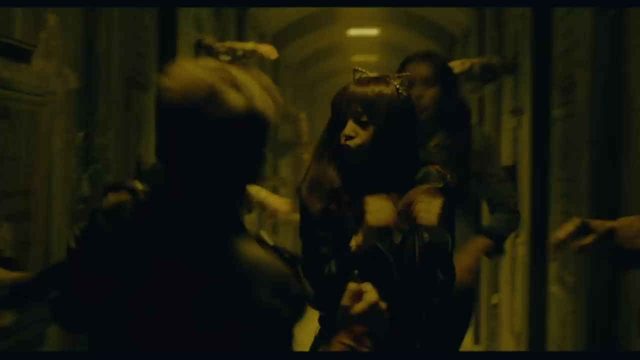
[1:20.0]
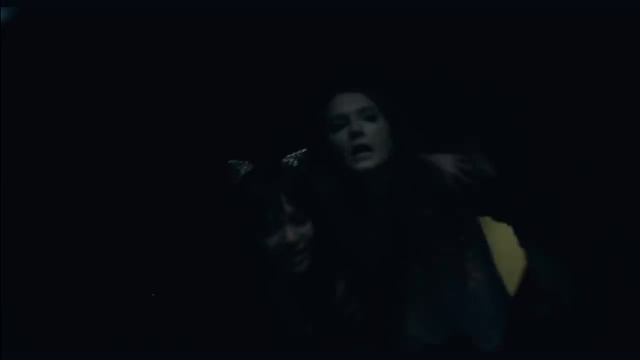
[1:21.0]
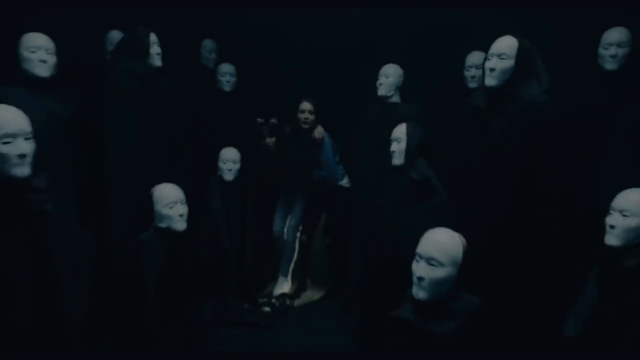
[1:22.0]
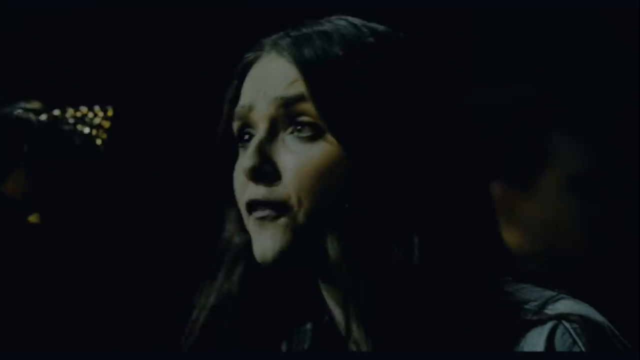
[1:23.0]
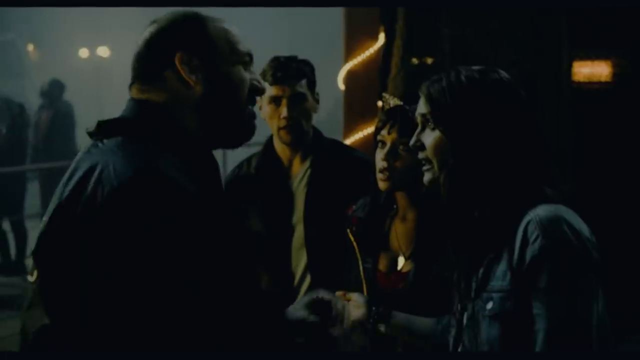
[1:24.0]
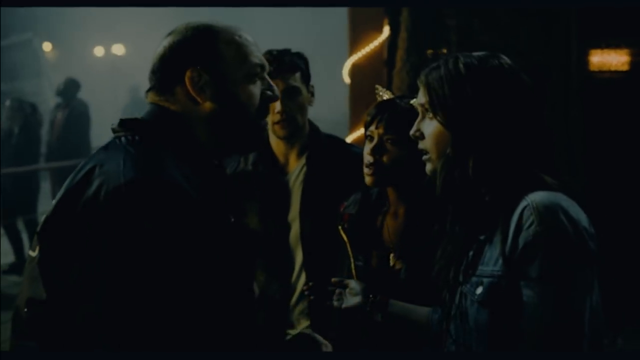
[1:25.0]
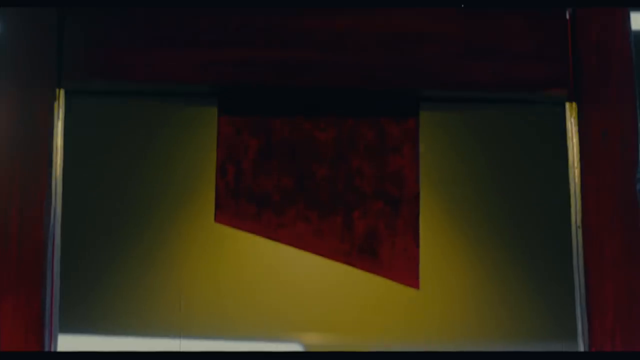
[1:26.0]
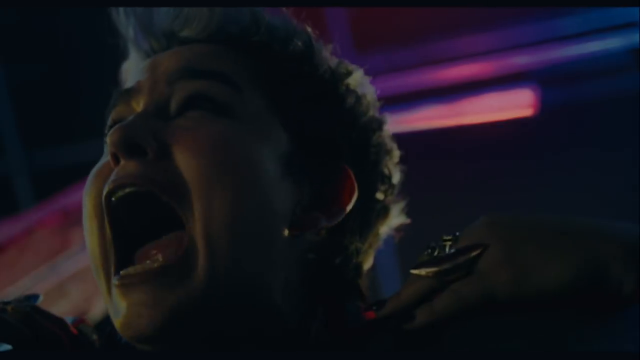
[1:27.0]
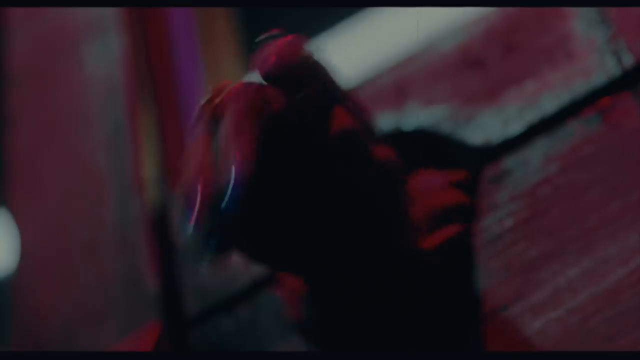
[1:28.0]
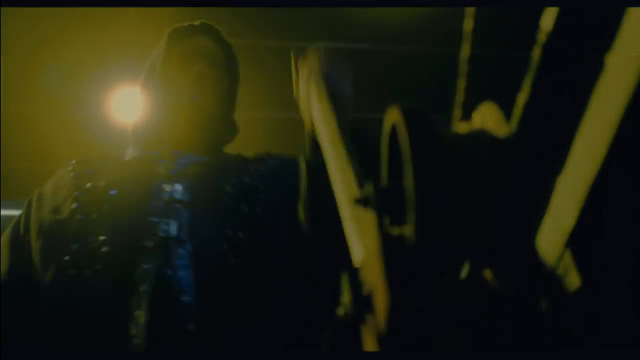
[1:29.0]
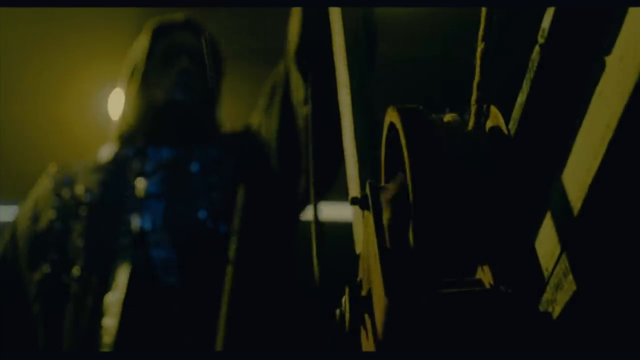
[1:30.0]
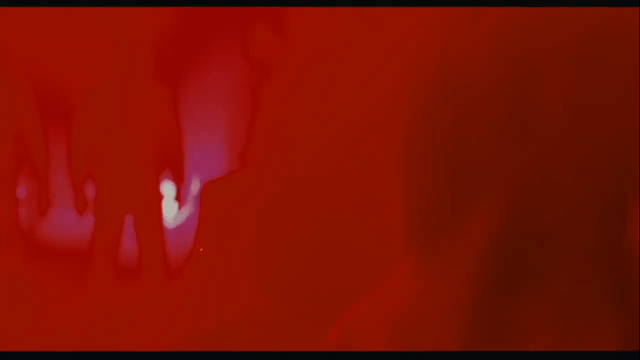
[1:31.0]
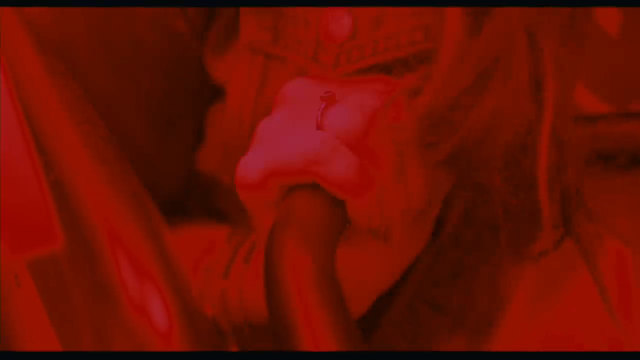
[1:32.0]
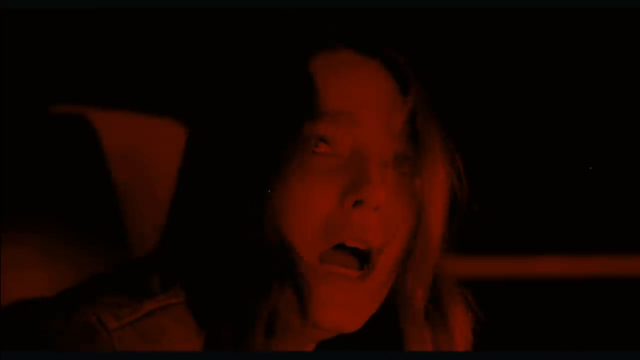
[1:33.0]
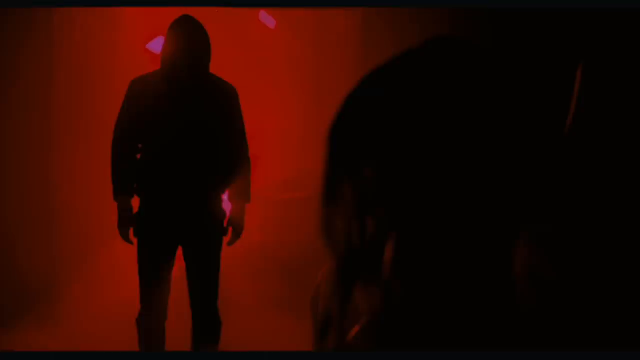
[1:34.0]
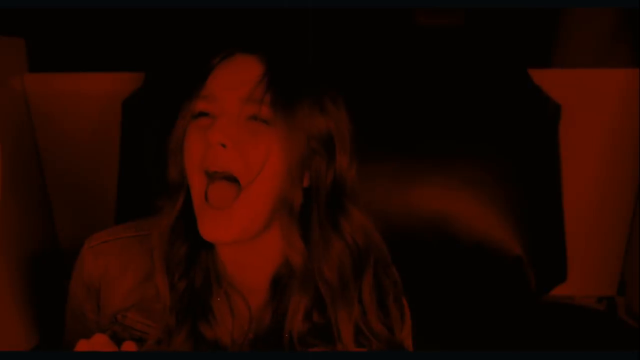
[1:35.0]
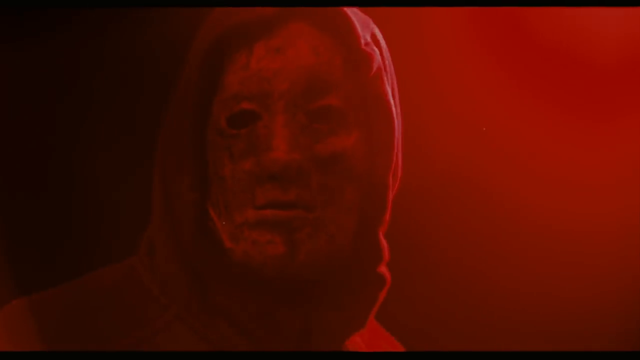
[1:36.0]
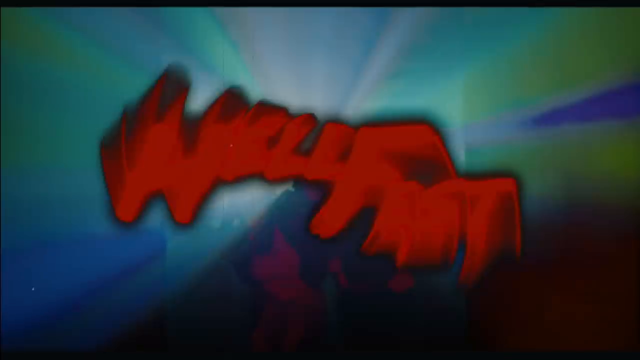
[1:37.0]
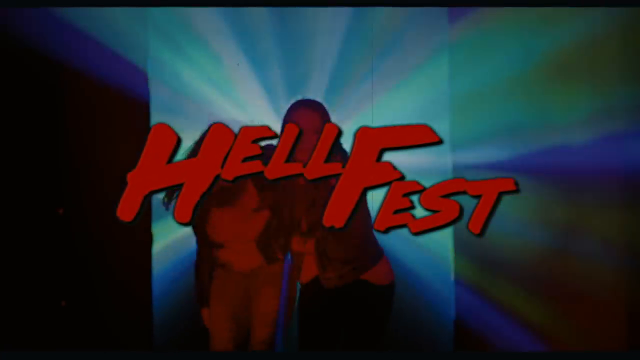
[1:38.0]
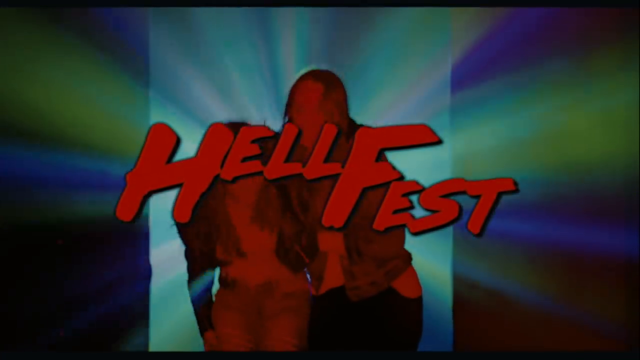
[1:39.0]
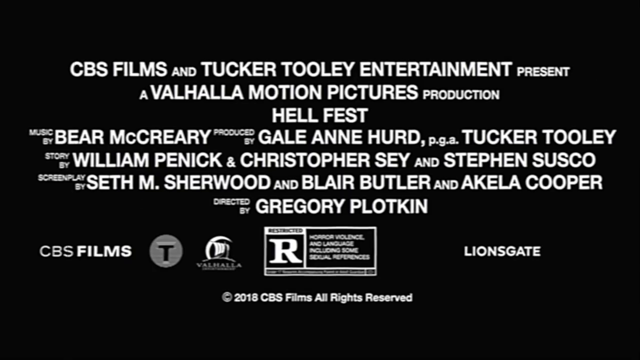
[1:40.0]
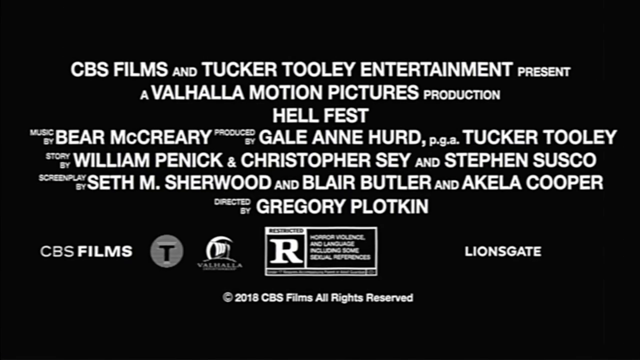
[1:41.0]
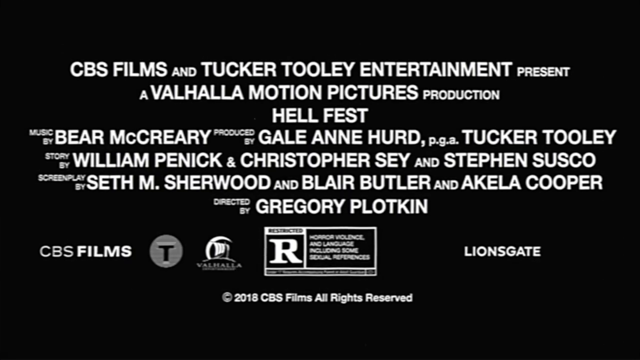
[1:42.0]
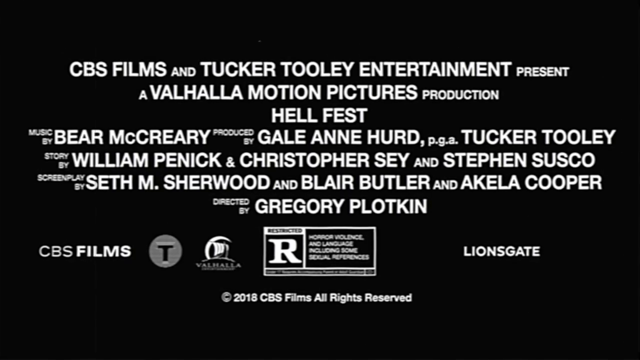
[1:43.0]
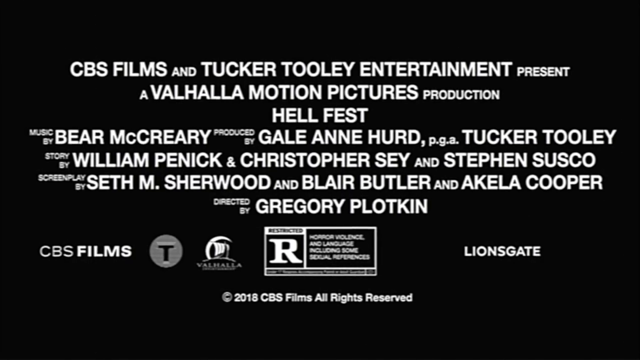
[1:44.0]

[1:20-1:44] A girl wearing cat ears appears to be running through woods, and some of her friends are running too. A girl appears to be in a dark mirror room, with the same face around her something like 20 times, and she looks really scared. Back outside, three of the group talk with an older guy; they look like they are trying to convince him of something, and he does not believe it and looks mad. A guillotine with red blood all over it is shown, with a girl's head in it; she screams while looking at a guy in a scary mask who watches her. The guillotine has a lever, and he pushes it forward so the blade comes down while the girl's neck is still in it. A girl who appears to be on a ride tries to get out of it, screaming, as a scary guy walks towards her. The two girls are shown again running together, and then "Hellfest" appears in red in the center of the screen, followed by information including that it is rated R and the people who created the film.